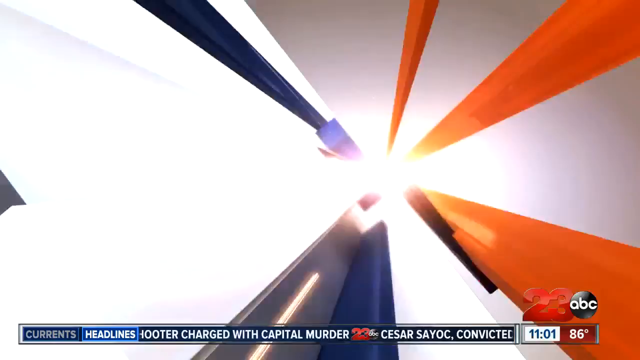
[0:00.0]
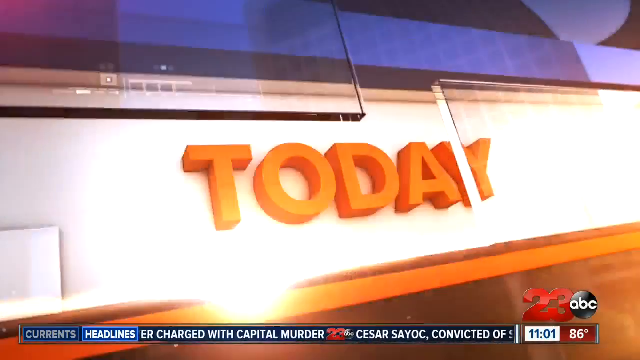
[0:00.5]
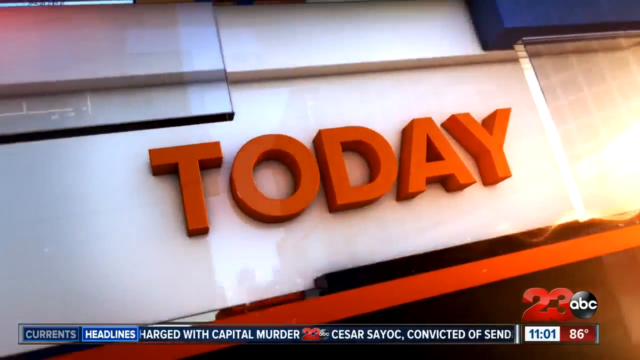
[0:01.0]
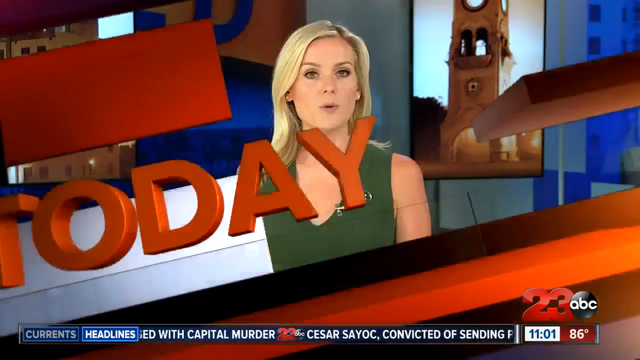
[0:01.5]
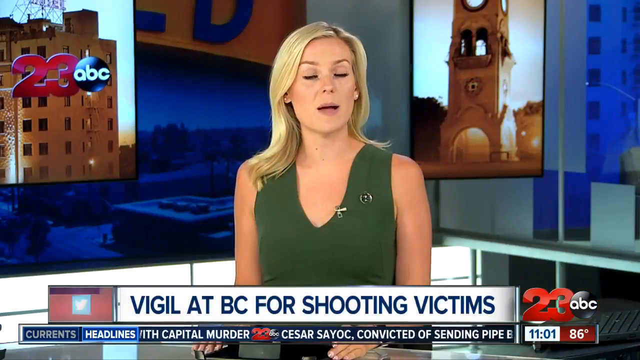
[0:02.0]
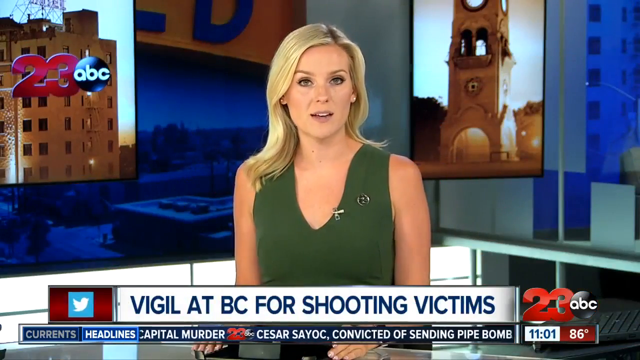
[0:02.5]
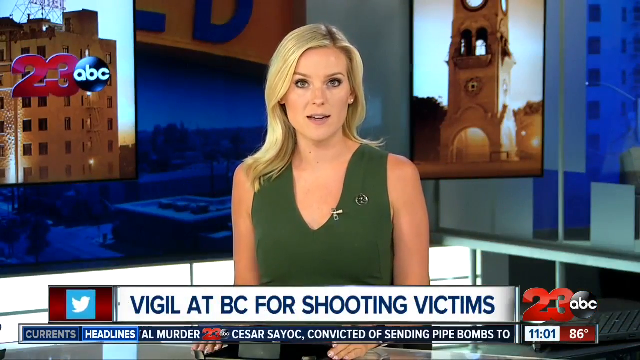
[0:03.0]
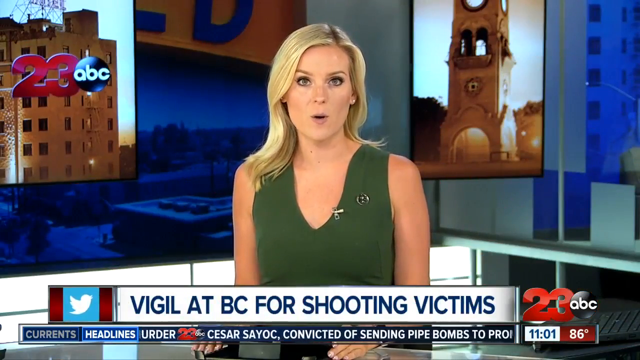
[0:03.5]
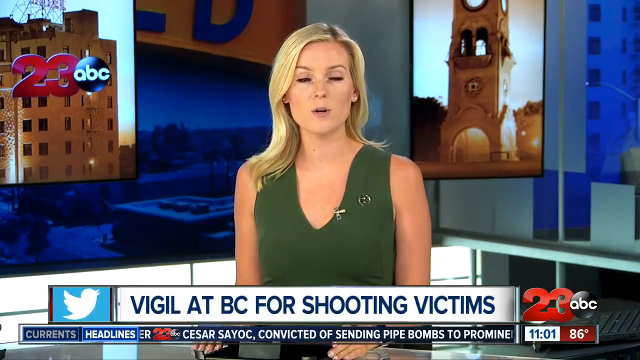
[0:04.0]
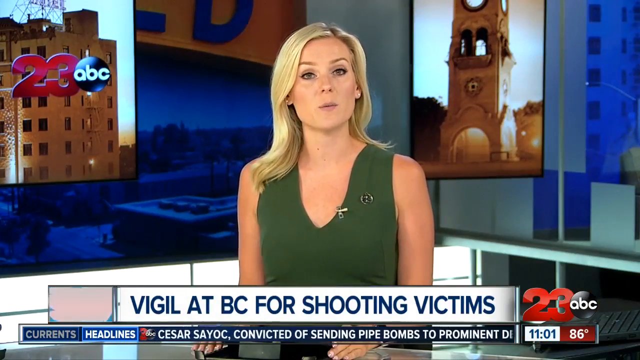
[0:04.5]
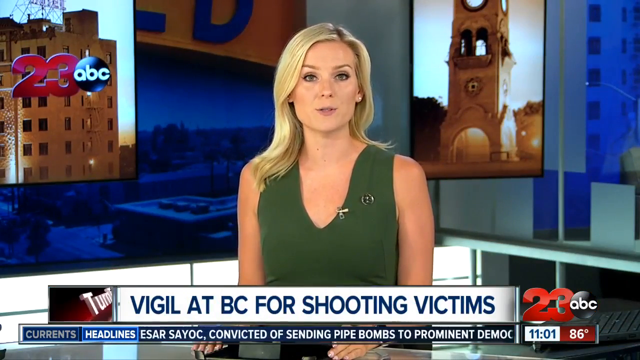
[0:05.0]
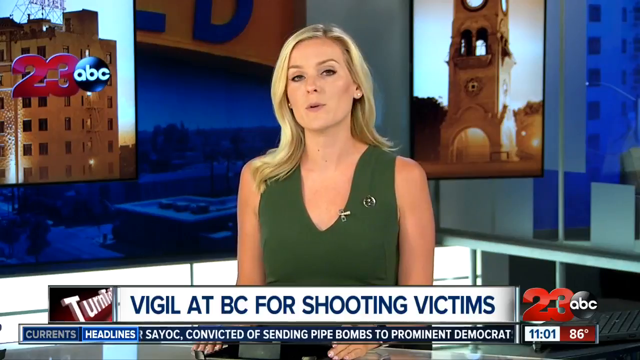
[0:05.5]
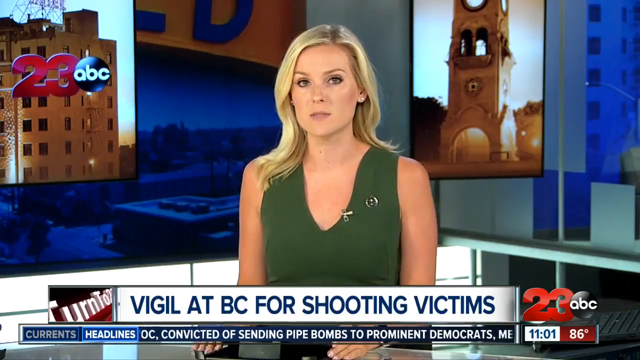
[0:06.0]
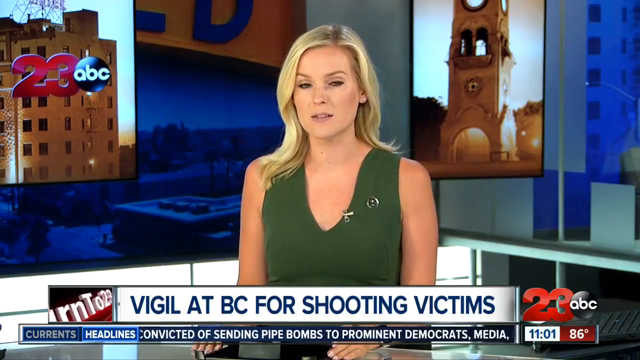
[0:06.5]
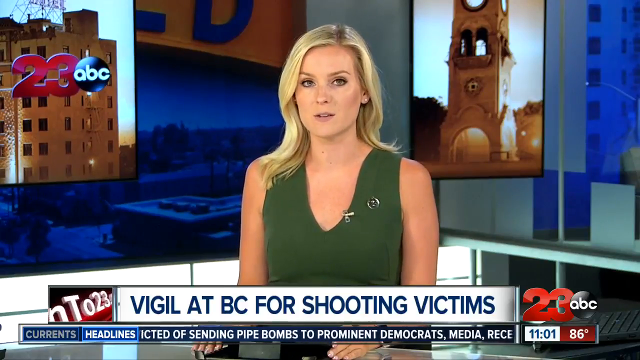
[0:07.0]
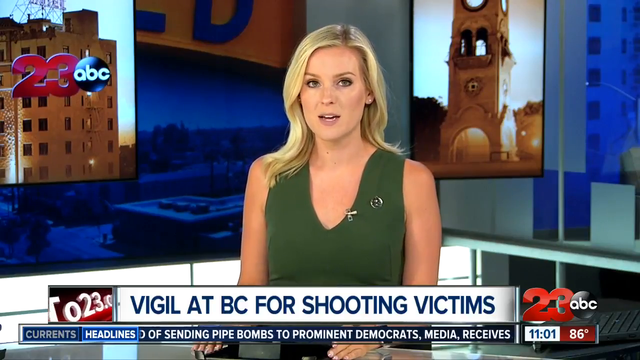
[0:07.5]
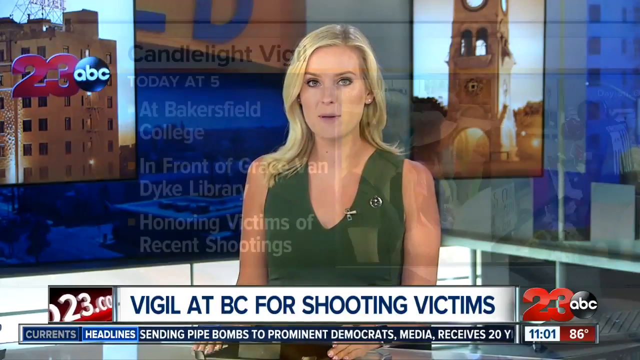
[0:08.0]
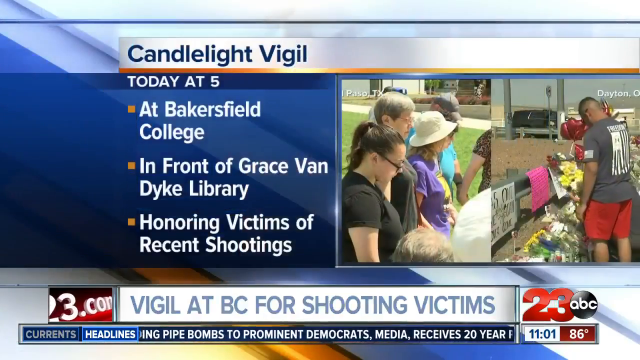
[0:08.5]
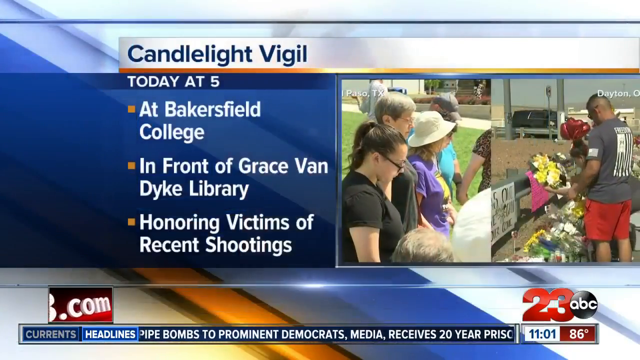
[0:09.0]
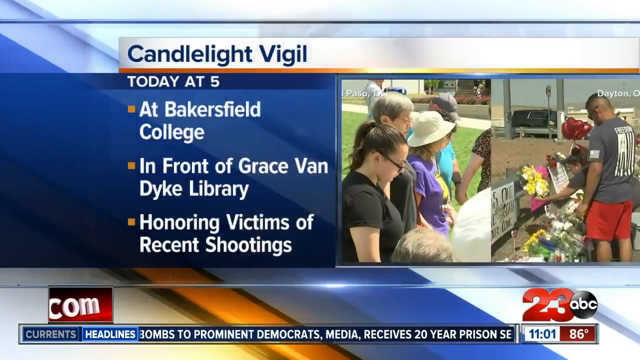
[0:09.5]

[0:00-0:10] A 23 ABC newscast opens in a newsroom setting. The main subject is the news anchor, a woman with shoulder-length blonde hair wearing a green shirt, sitting at a desk. She looks straight at the camera and speaks about a news story, and a microphone is clipped to the left side of her shirt. At the bottom of the screen, the story's banner reads "Vigil at BC for shooting victims." The frame then moves on to information about a candlelight vigil held today at 5 o'clock. Bullet points on the left-hand side give details of the vigil, and on the right are two photos of people at the vigil paying their respects to the victims: one shows a group of women standing in a line, and the other shows the back of a man staring at various signs left on the side of the roadway for the victims.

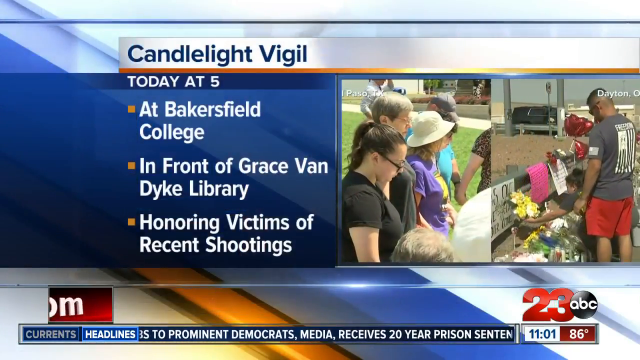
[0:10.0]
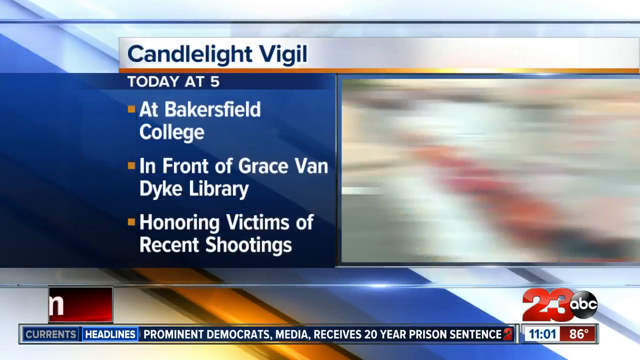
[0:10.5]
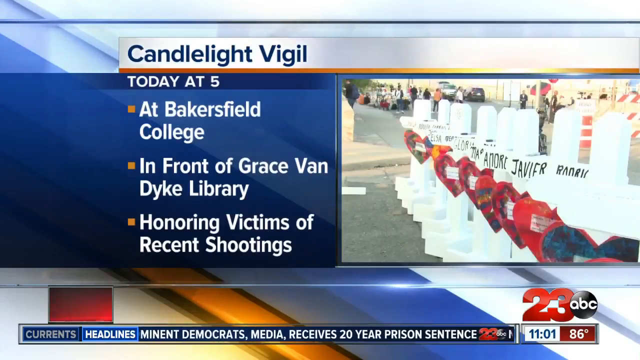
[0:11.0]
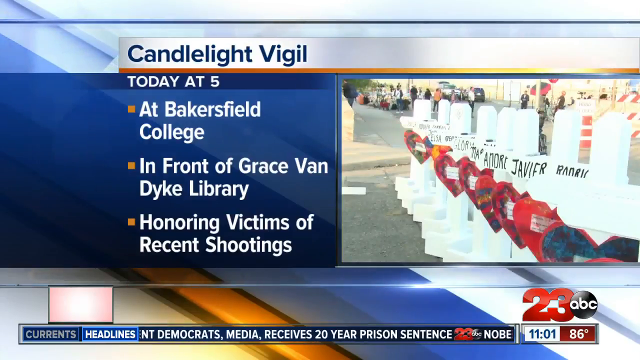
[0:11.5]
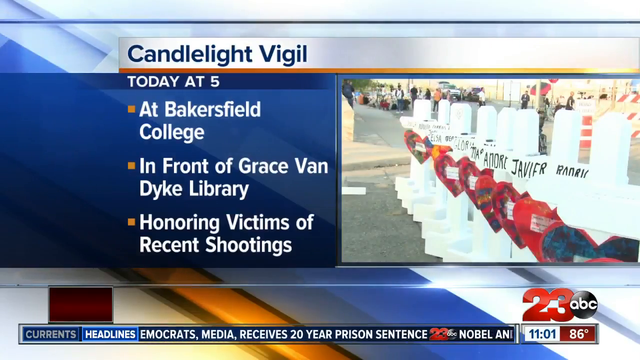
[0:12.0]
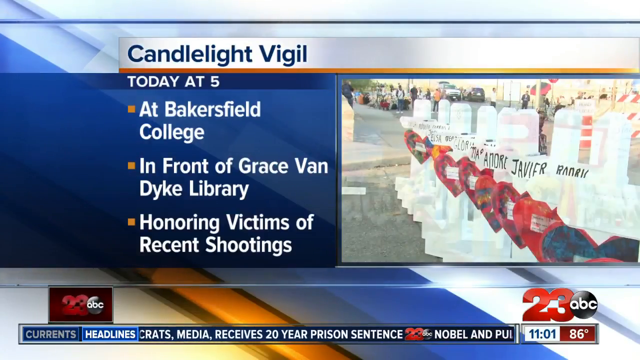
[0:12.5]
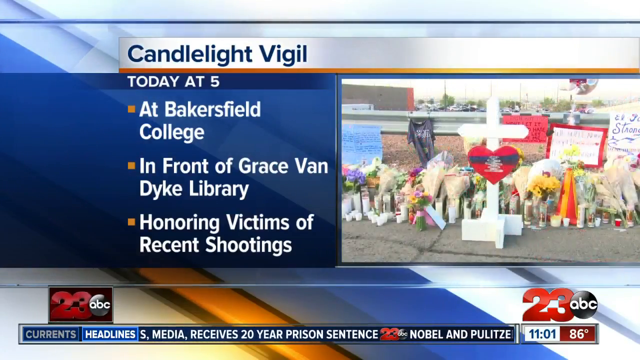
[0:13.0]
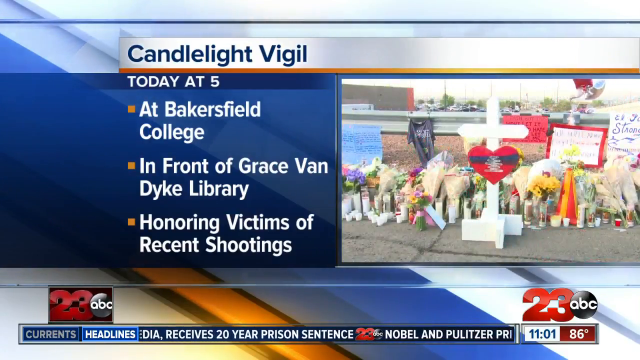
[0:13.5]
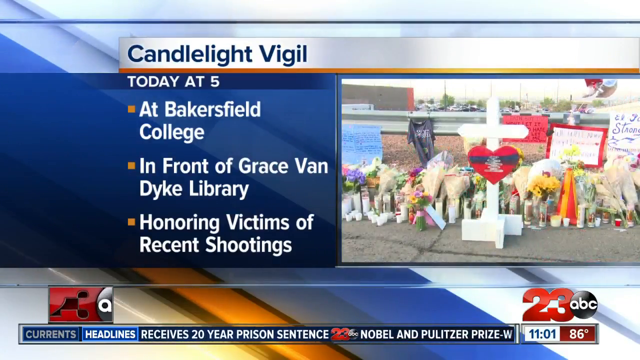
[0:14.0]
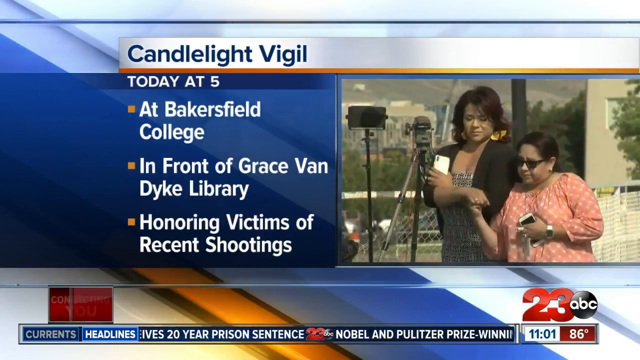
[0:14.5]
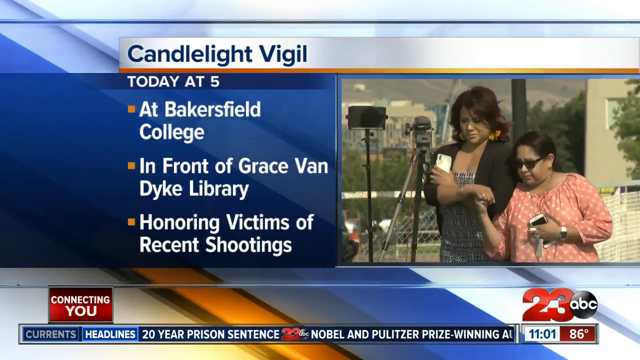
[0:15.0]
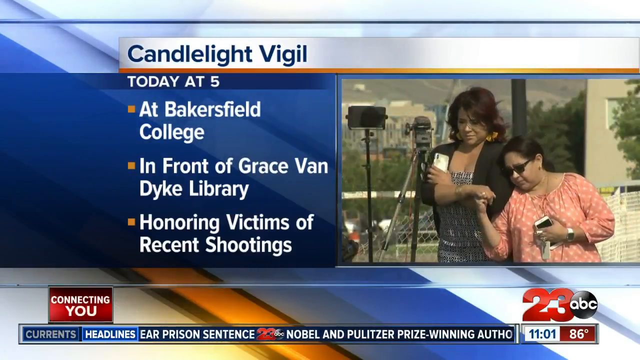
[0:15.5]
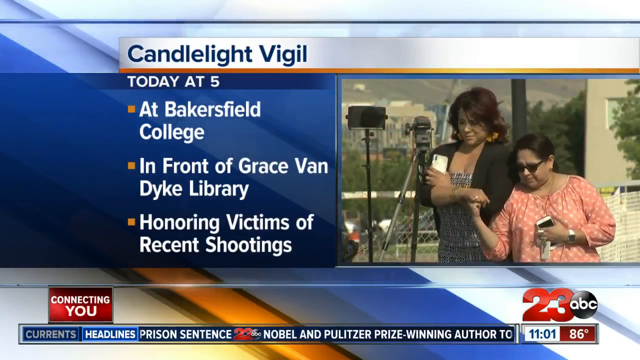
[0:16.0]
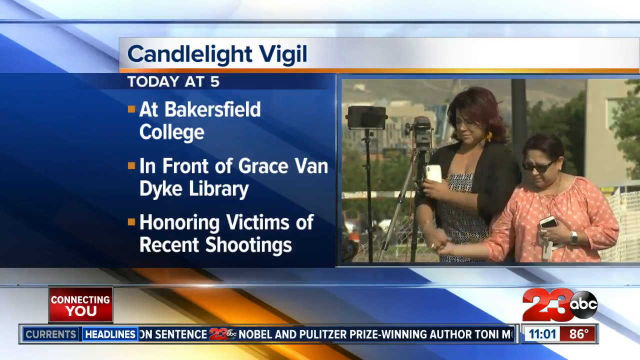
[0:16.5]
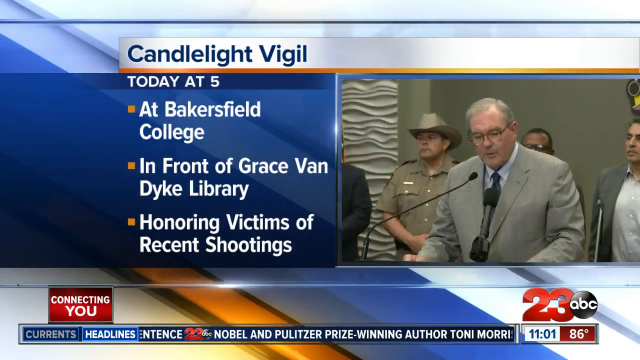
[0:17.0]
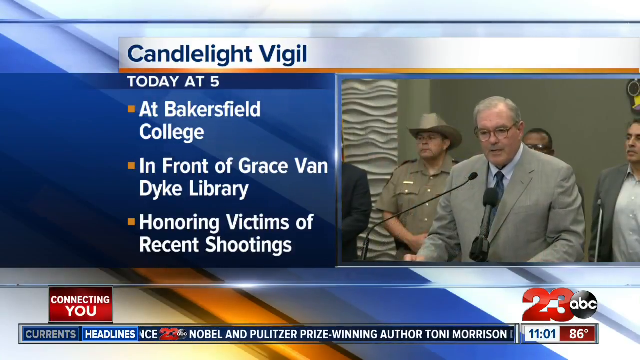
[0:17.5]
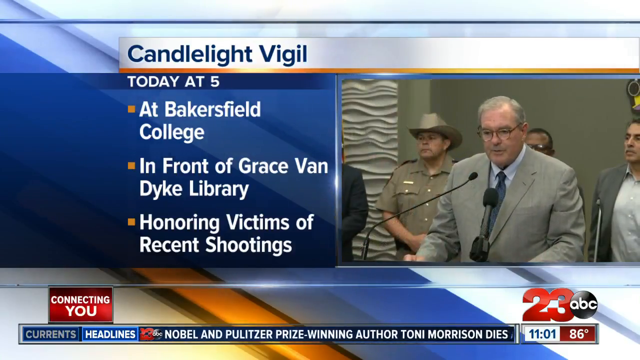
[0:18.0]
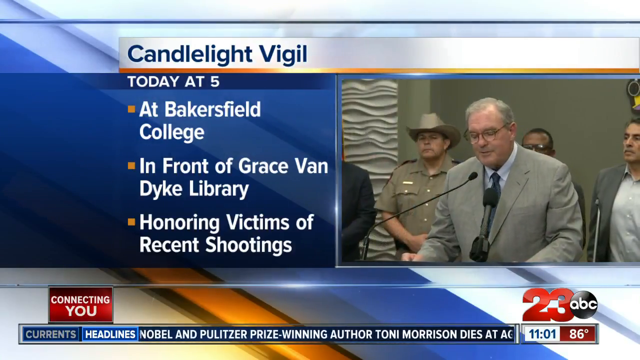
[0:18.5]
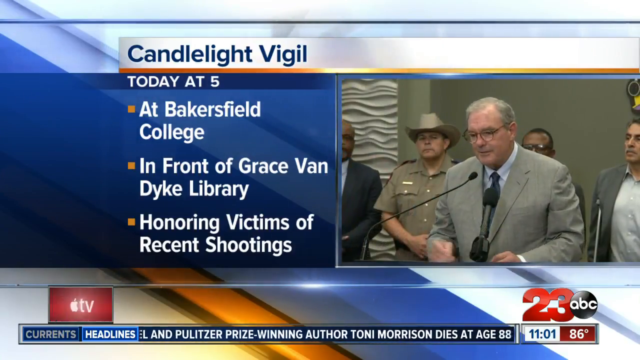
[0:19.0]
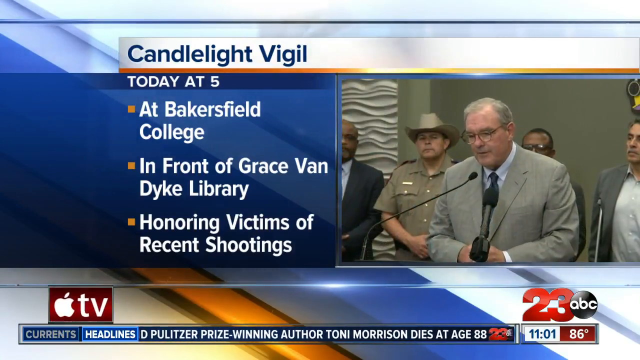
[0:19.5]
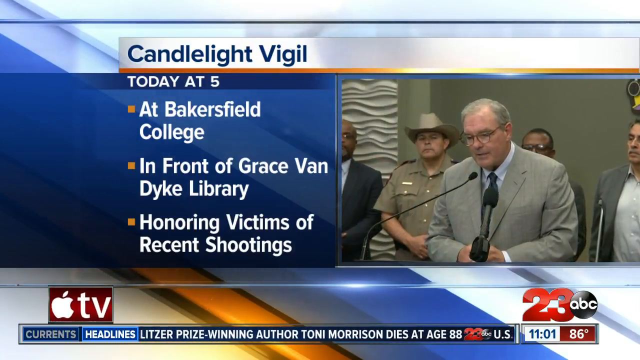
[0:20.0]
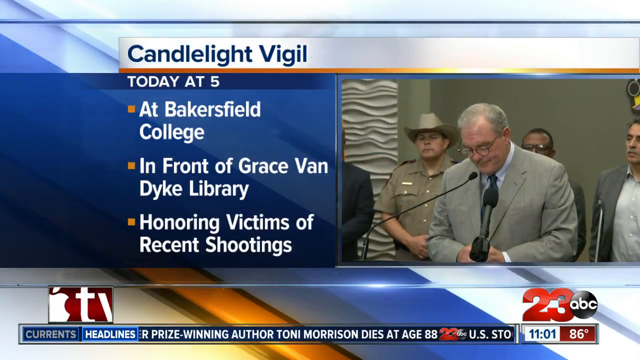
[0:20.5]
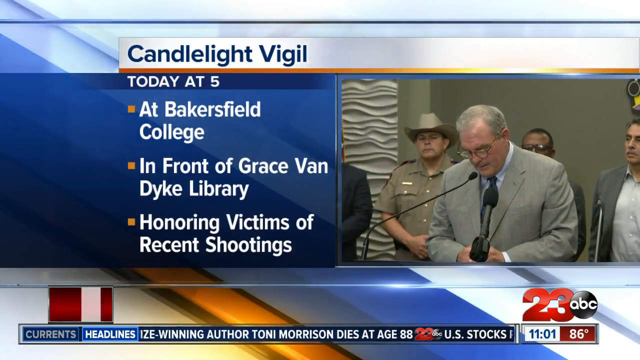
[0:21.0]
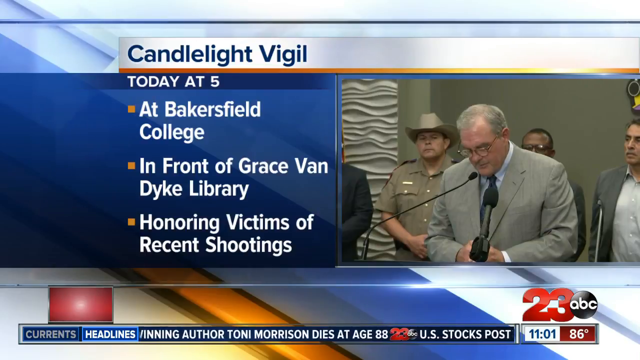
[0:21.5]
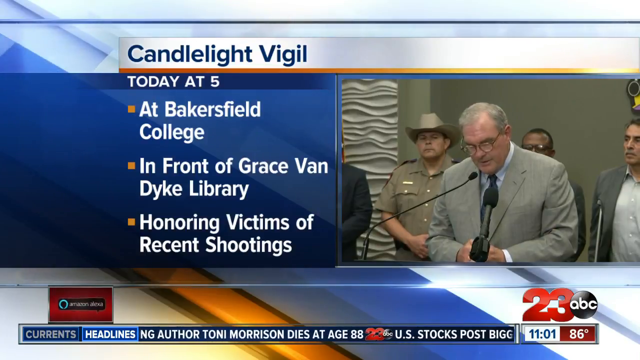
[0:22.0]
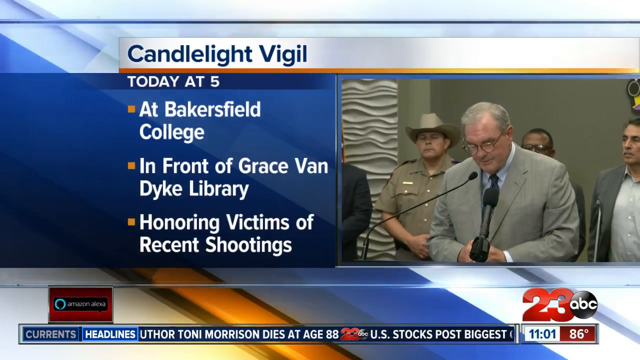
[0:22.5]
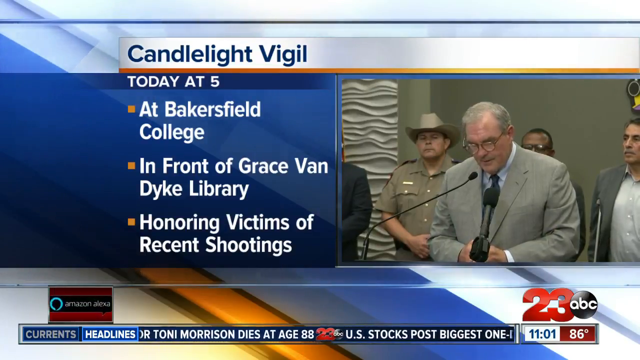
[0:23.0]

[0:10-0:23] Another photo pops up showing about seven or eight white crosses in a line, which appear to have names written on them, with a red heart in the center of every cross. The video then moves on to footage of people talking, most likely about the event. A man with gray hair, wearing a gray suit jacket and glasses, stands at a podium. Various men stand behind him, including one who looks like a law enforcement officer; that officer wears a hat and has a name badge on the right side of his chest.